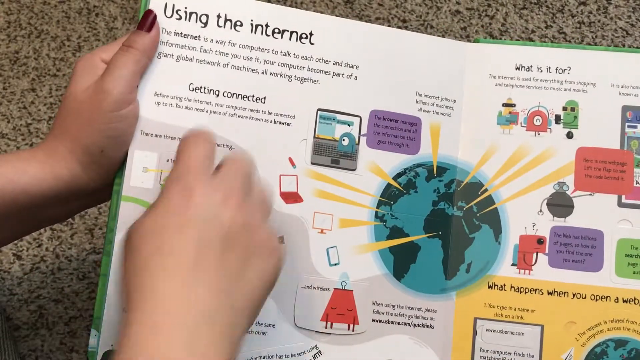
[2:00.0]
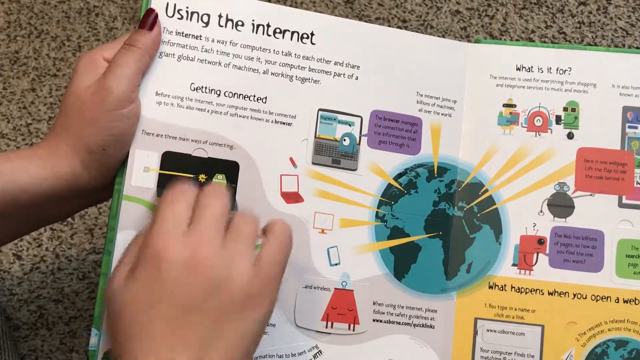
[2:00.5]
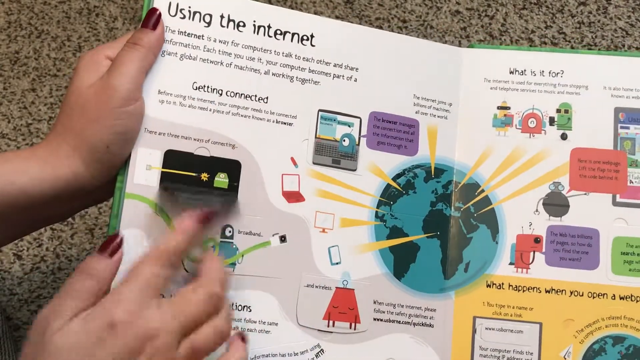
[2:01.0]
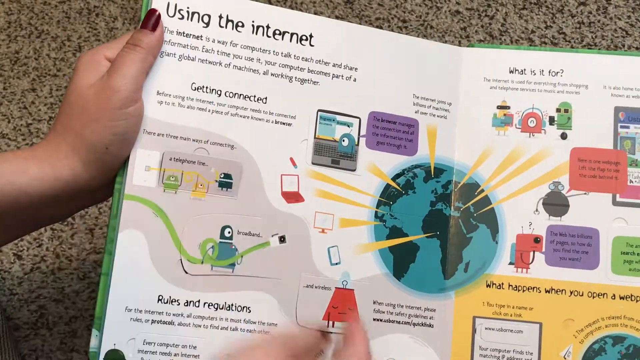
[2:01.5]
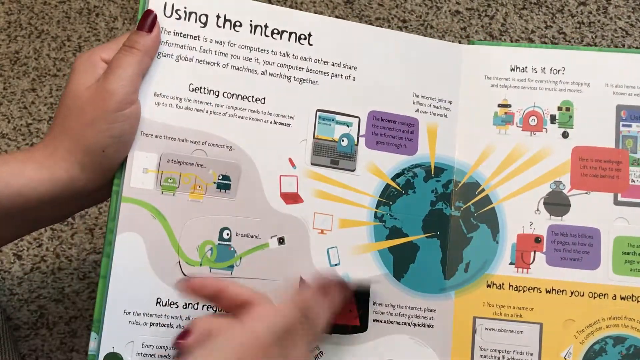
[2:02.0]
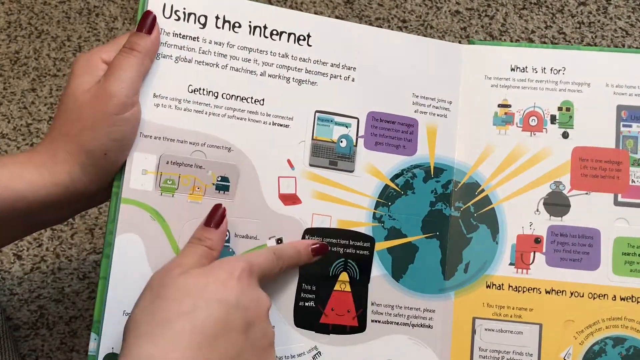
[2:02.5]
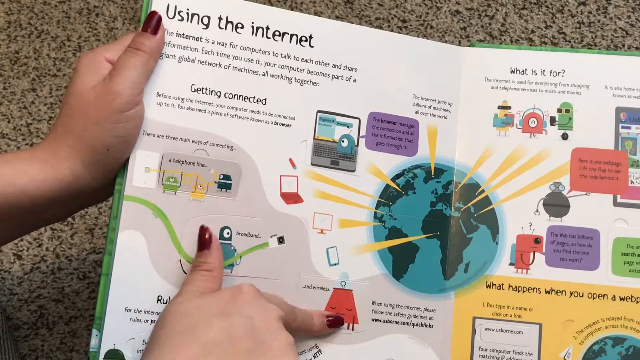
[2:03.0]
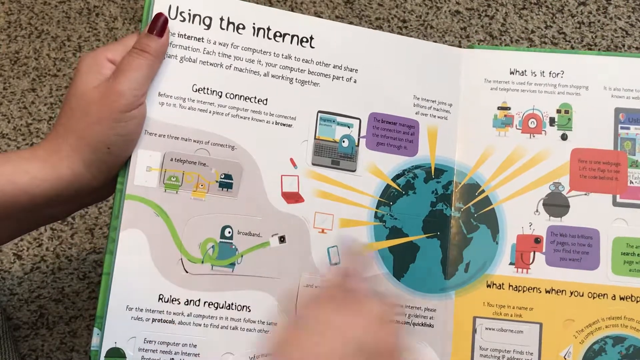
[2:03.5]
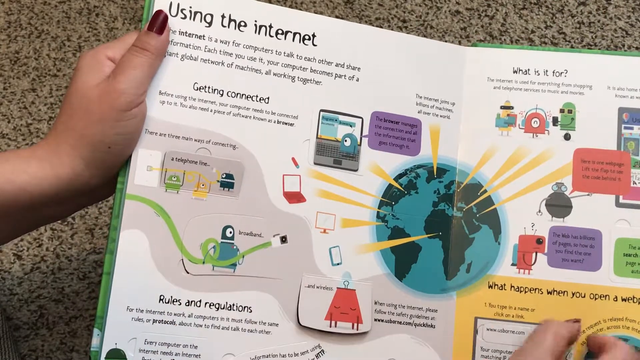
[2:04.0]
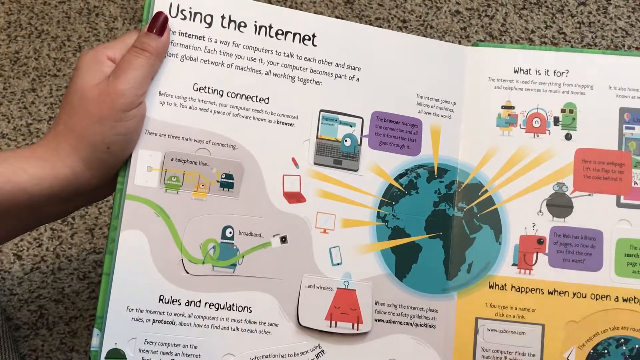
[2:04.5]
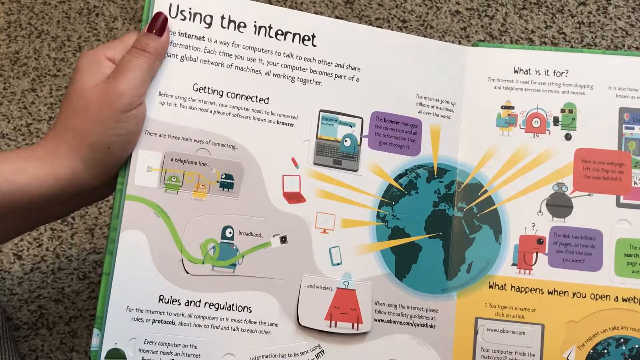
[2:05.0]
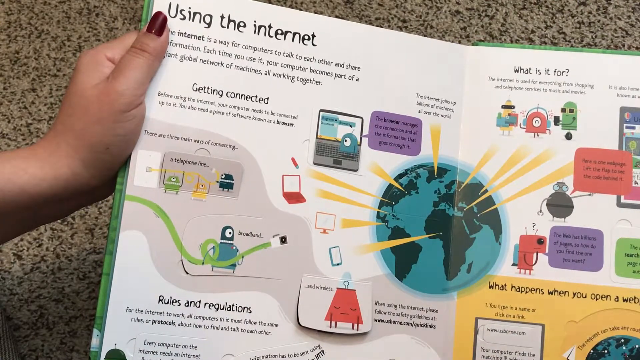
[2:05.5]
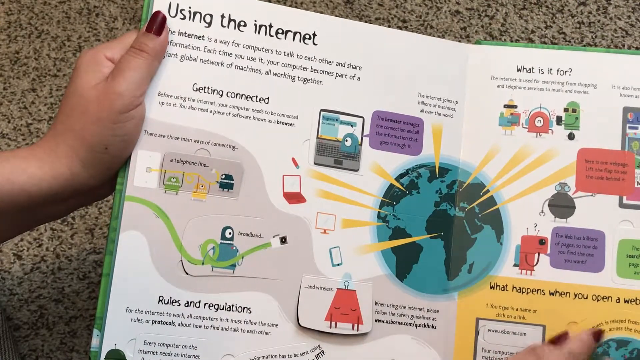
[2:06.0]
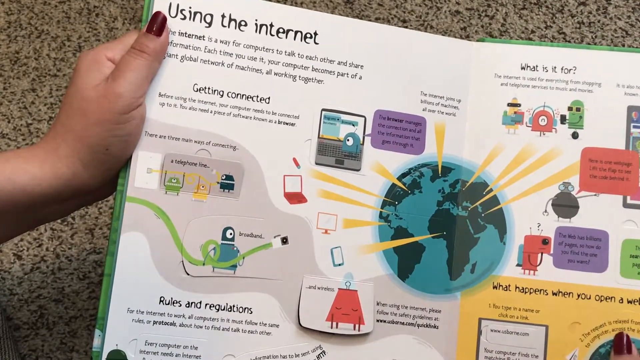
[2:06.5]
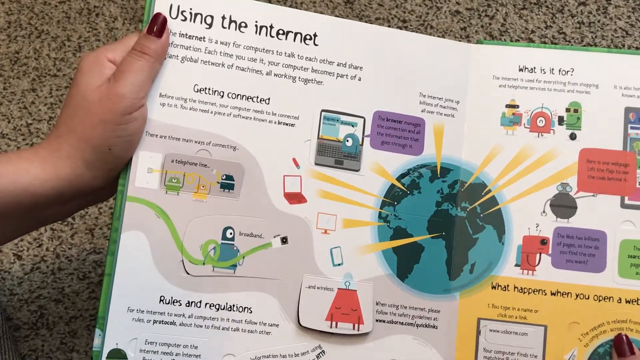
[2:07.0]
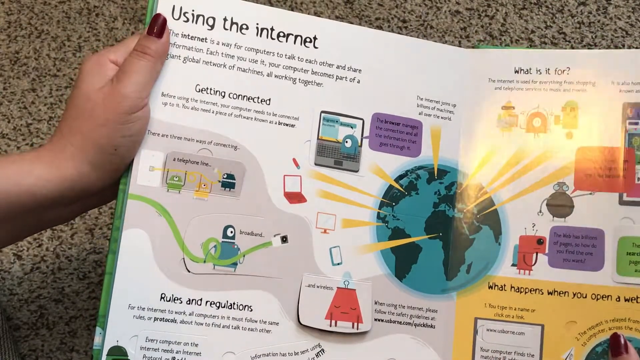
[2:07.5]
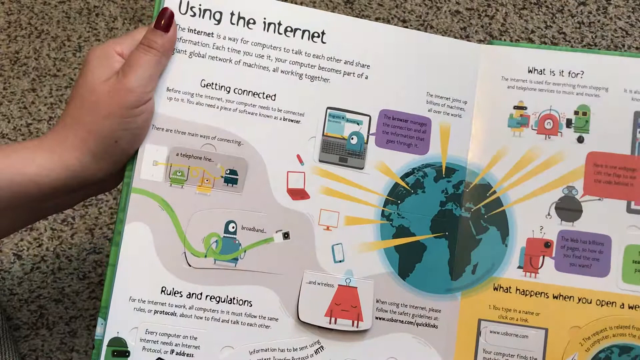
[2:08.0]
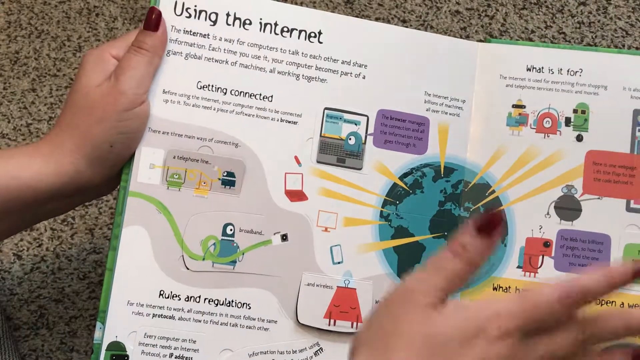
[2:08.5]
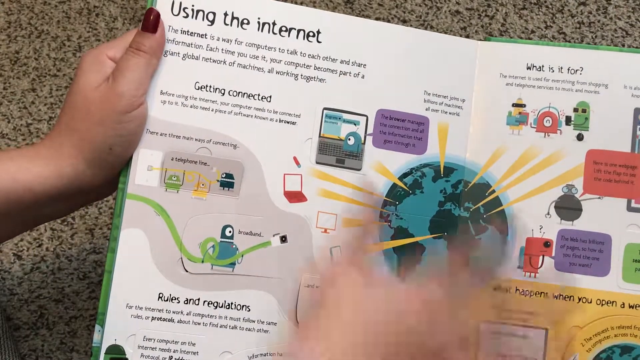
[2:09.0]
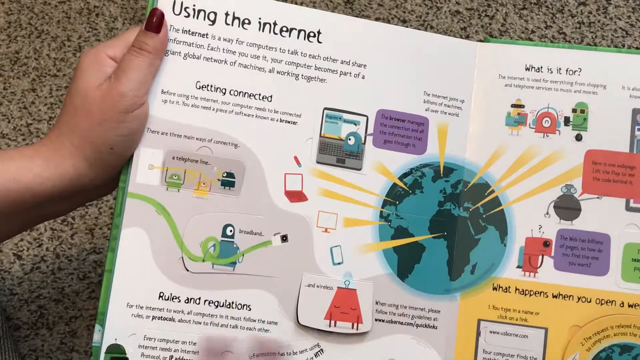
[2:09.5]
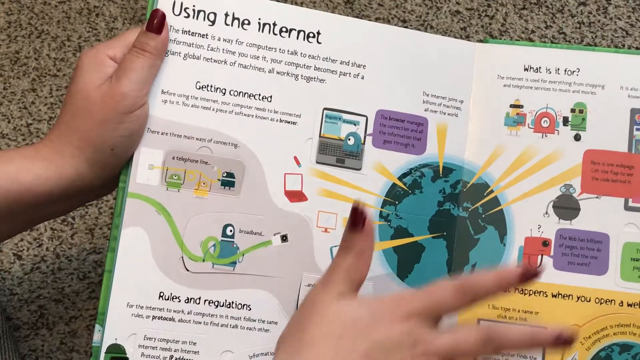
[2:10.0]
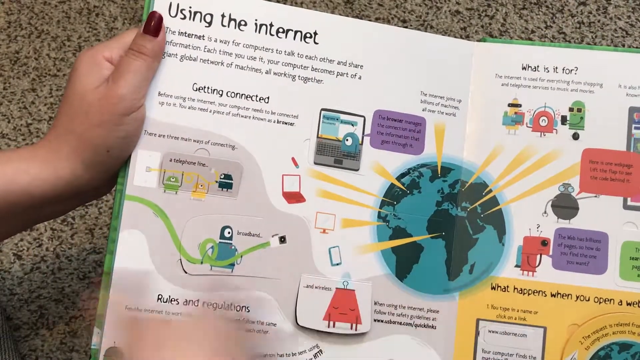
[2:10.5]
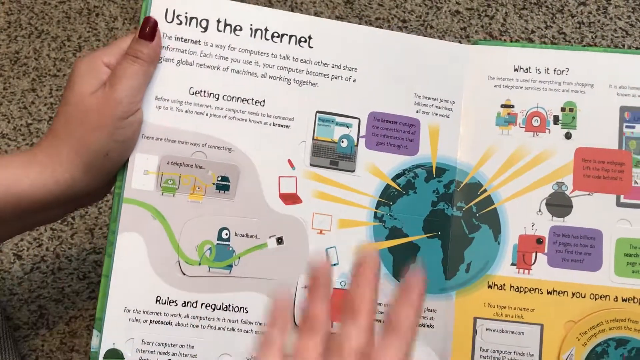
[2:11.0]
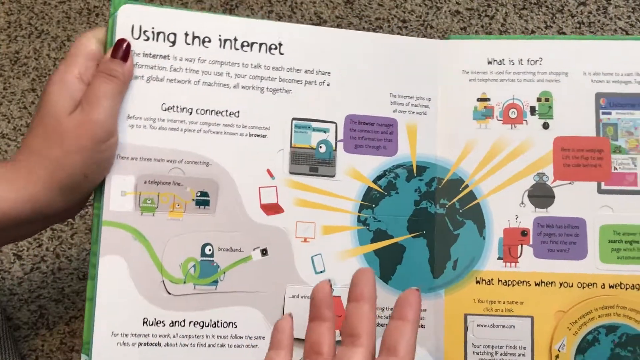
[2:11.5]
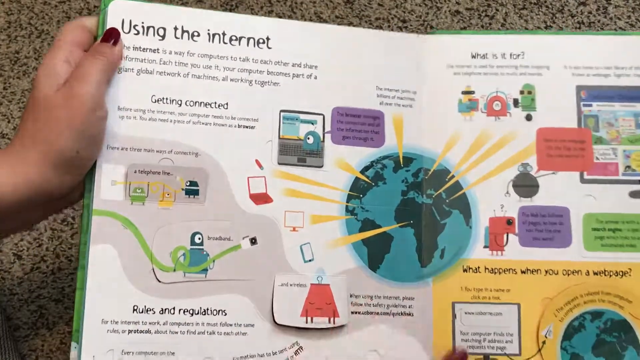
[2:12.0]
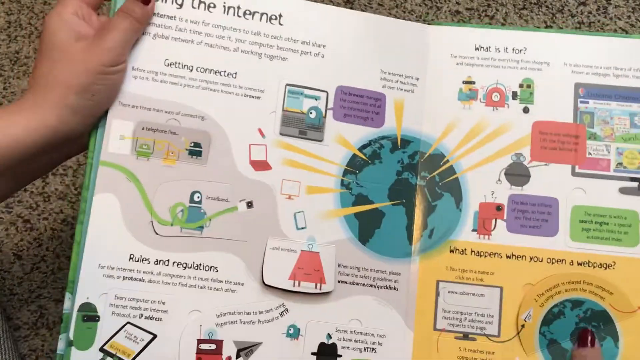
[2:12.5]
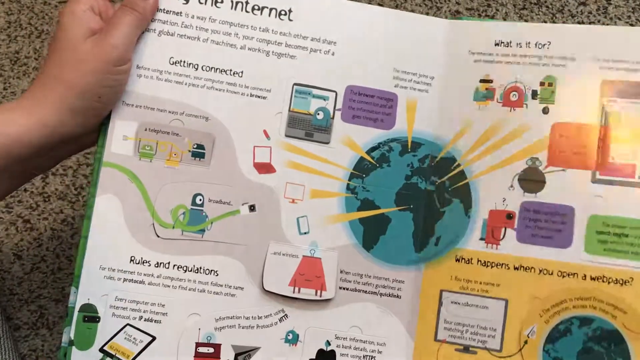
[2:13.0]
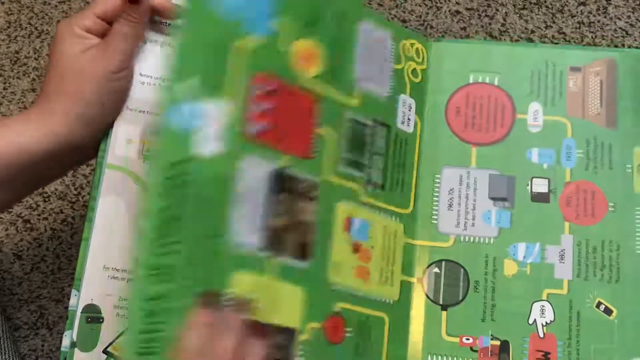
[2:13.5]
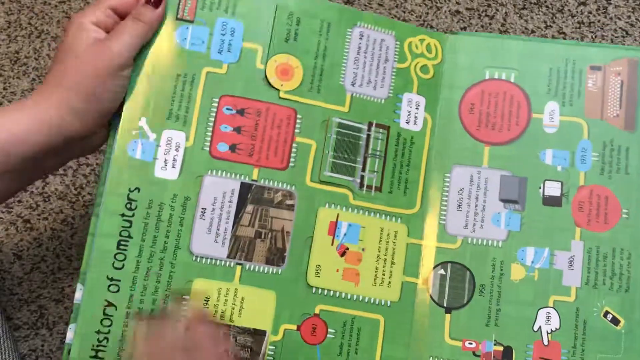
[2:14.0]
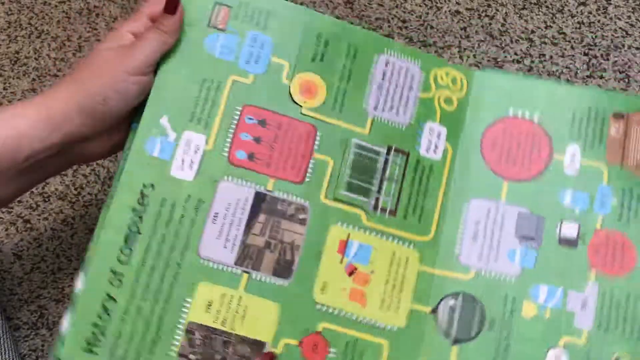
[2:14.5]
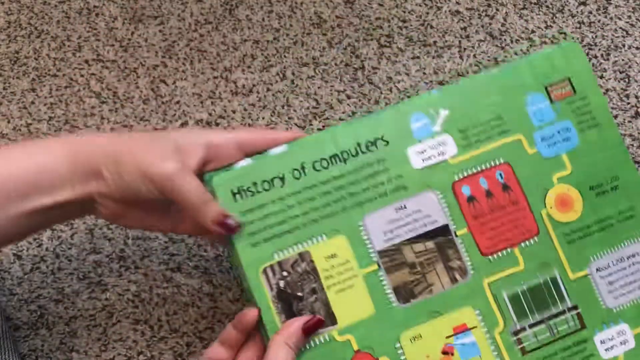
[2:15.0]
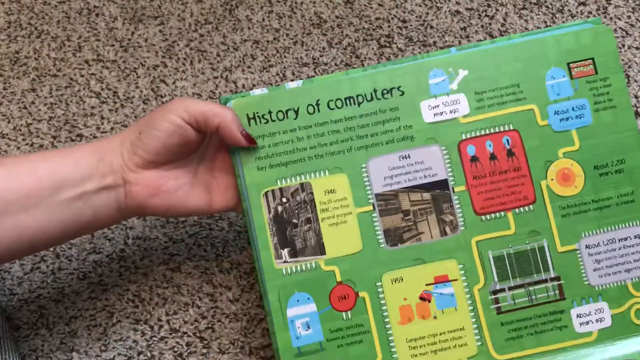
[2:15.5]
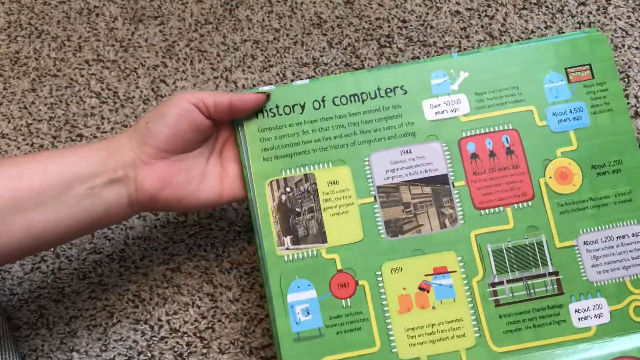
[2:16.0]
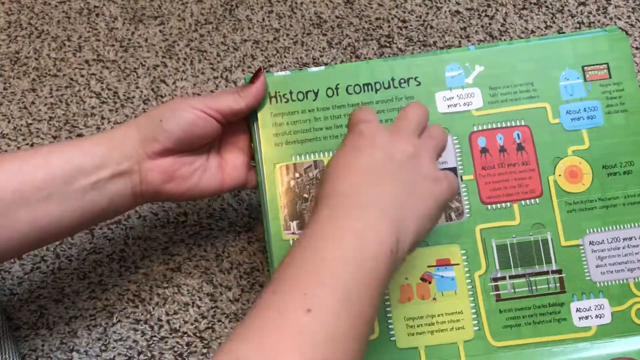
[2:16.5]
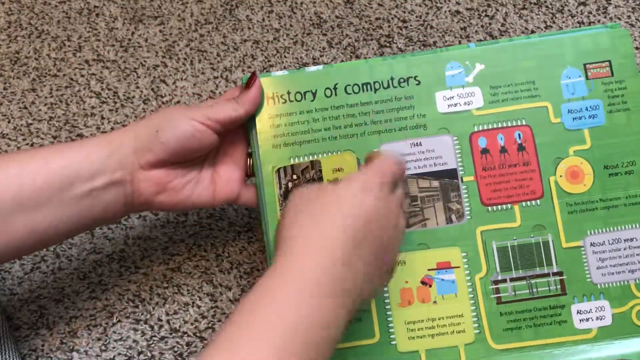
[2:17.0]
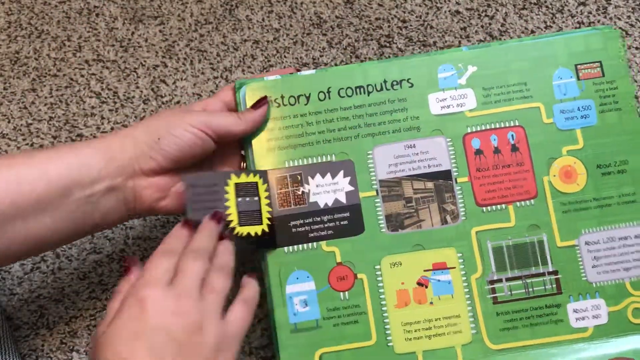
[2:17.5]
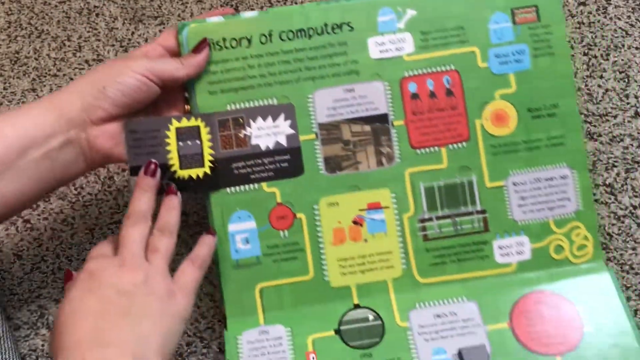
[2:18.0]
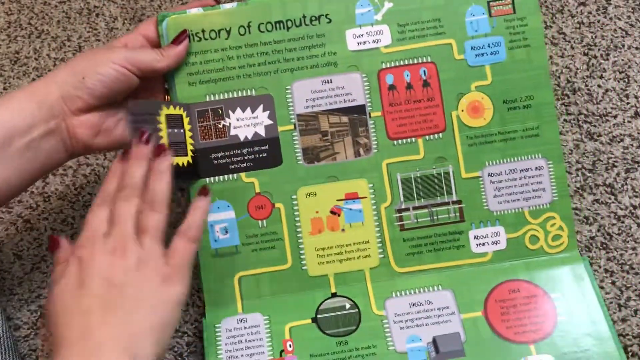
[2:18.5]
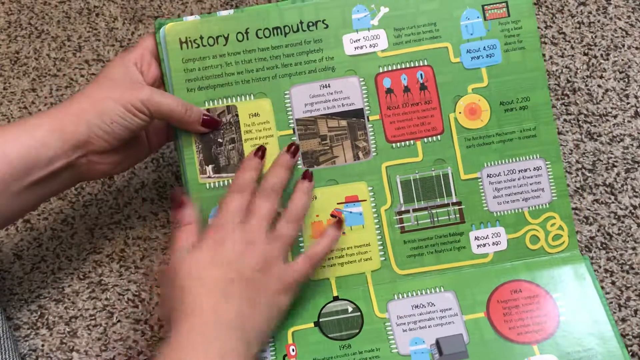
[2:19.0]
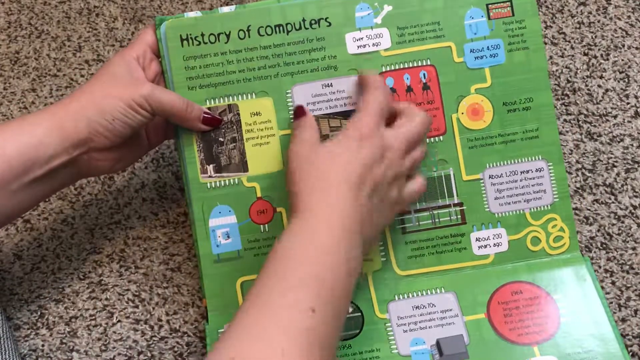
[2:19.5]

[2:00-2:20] Still on the "Using the internet" page, the woman flips an illustration under "Getting connected" and another one that looks like a red lamp cover, revealing the same lamp cover giving off something like a Wi-Fi signal. Another illustration is a globe, with light coming out of it from major cities around the world. She also flips something out of sight in the bottom right corner, under the box "What happens when you open a website". On this page she mostly does not flip the flaps; she hovers her hand over a few sections, as if talking about the page in detail. She then moves to the other page, titled "History of computers", which has a flow chart of important events in the history of computing and computers. She turns the book on its side and opens the first flap, then the second flap.